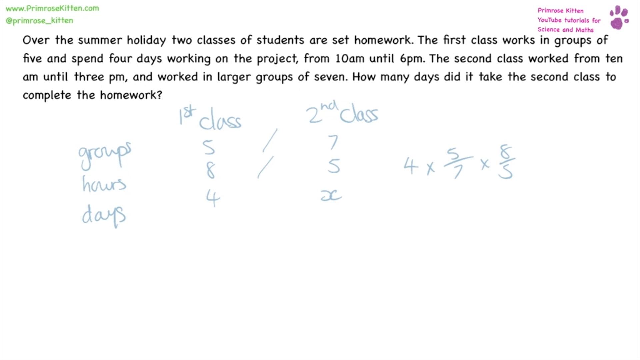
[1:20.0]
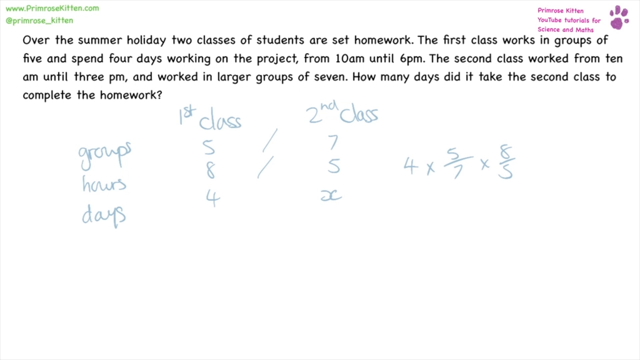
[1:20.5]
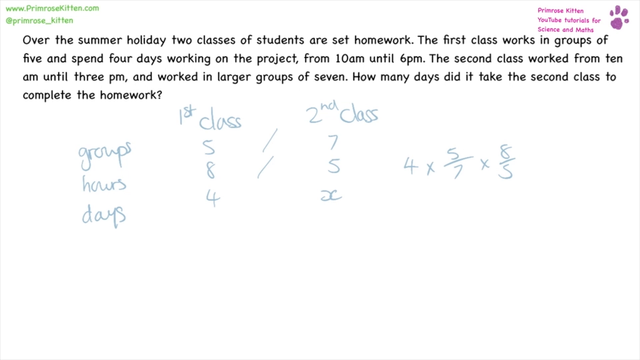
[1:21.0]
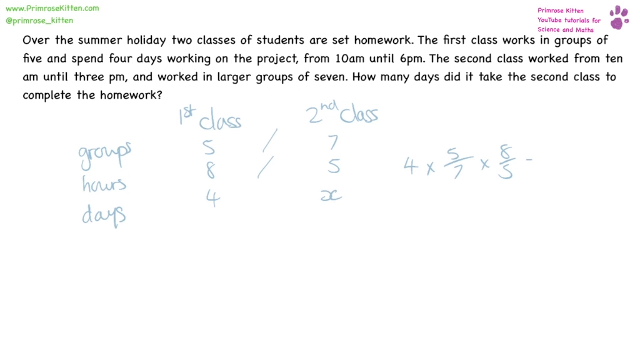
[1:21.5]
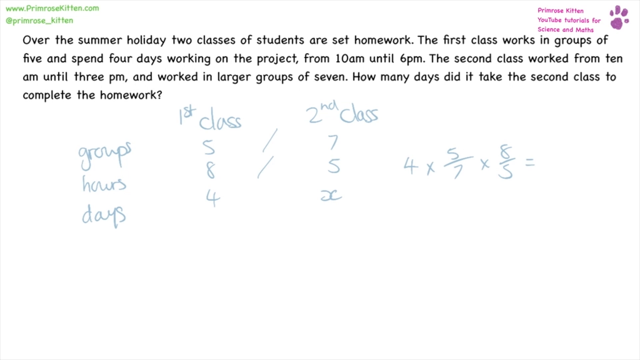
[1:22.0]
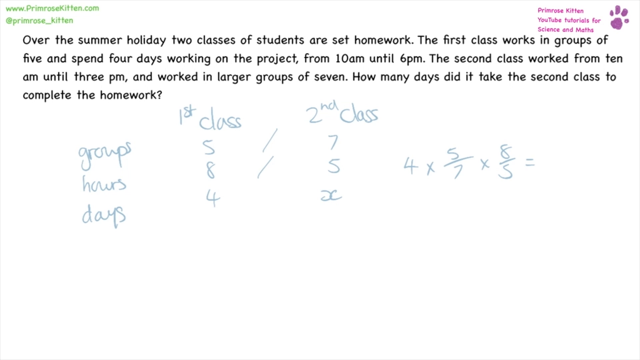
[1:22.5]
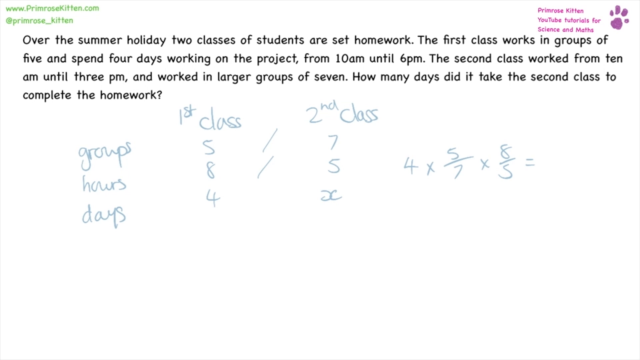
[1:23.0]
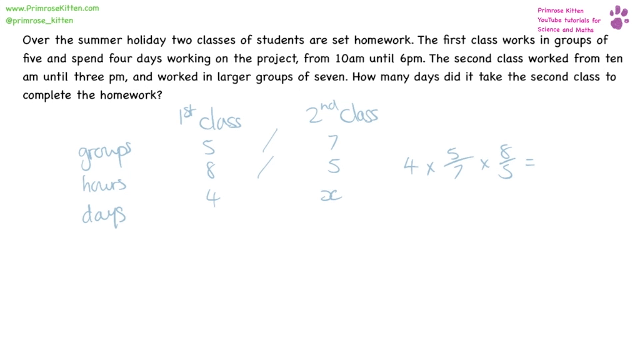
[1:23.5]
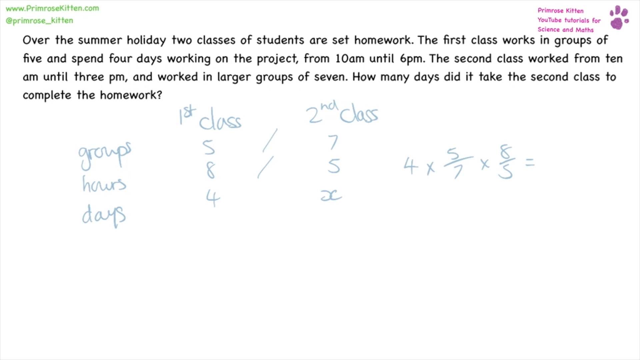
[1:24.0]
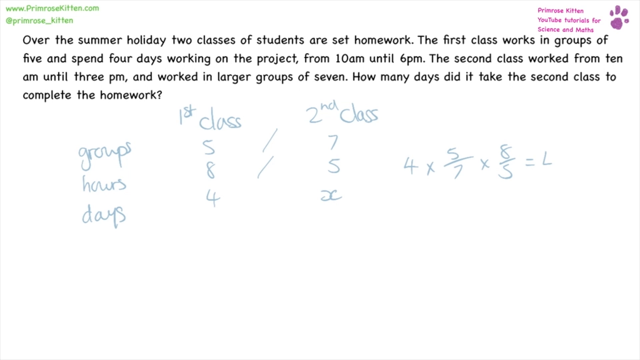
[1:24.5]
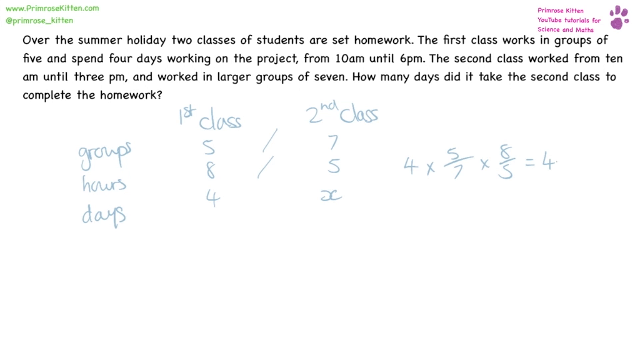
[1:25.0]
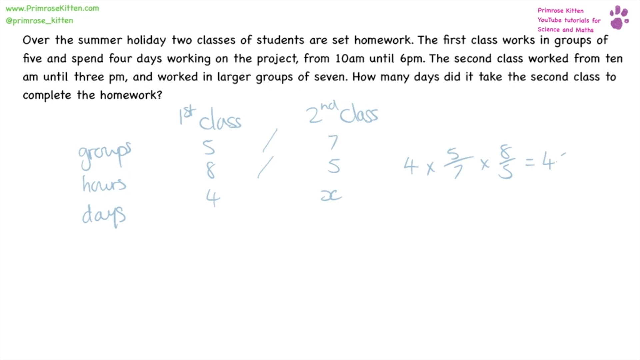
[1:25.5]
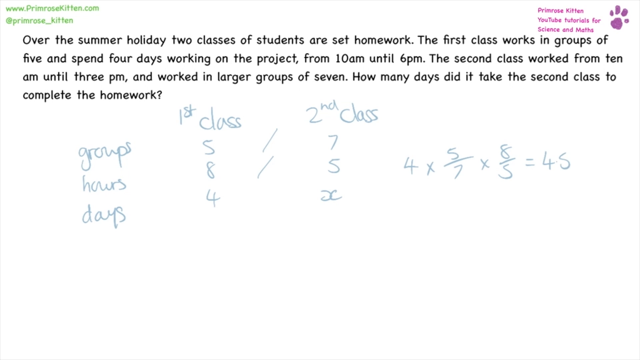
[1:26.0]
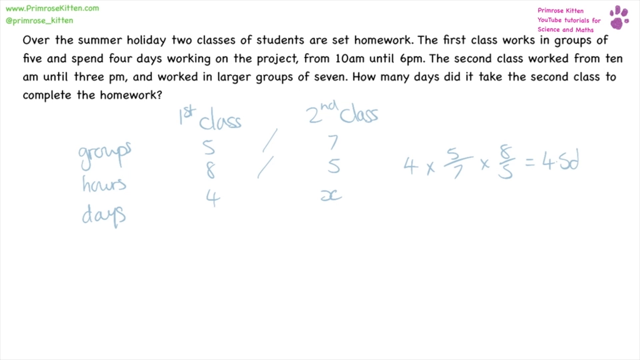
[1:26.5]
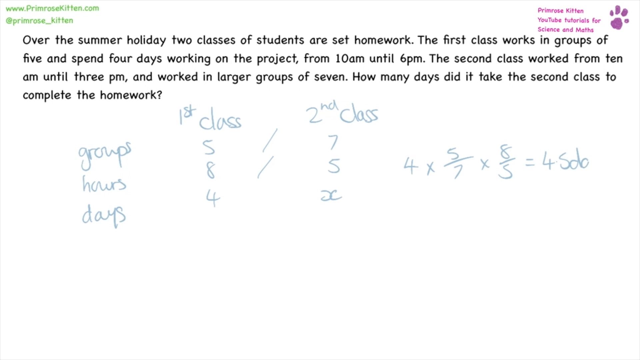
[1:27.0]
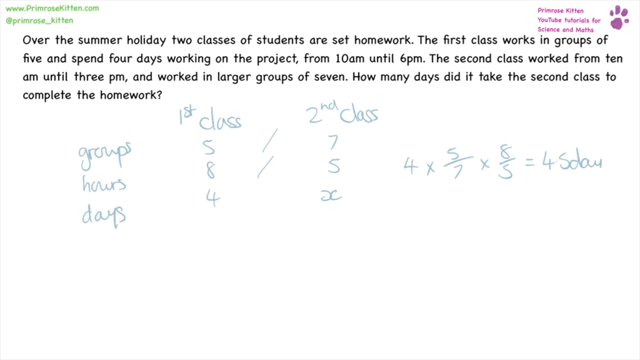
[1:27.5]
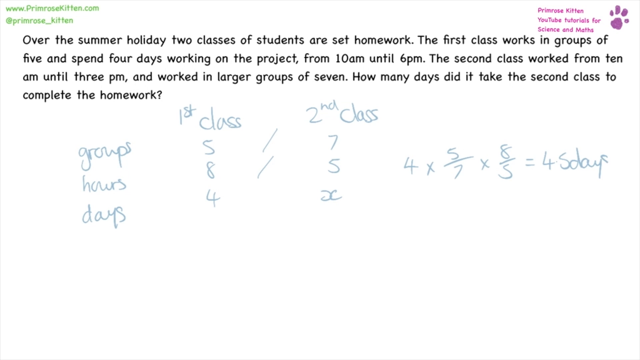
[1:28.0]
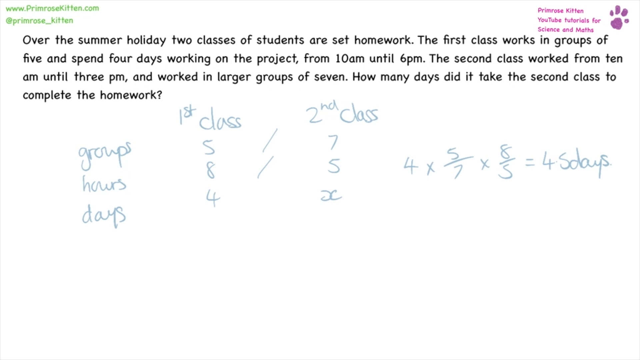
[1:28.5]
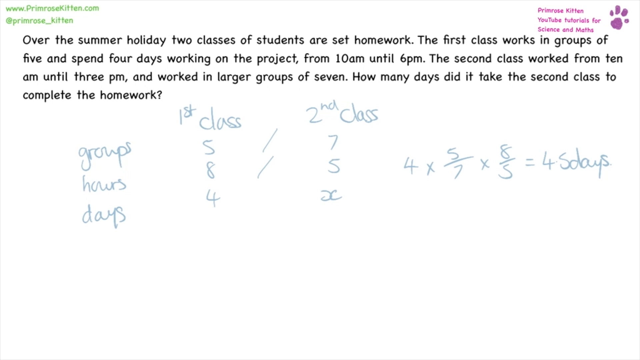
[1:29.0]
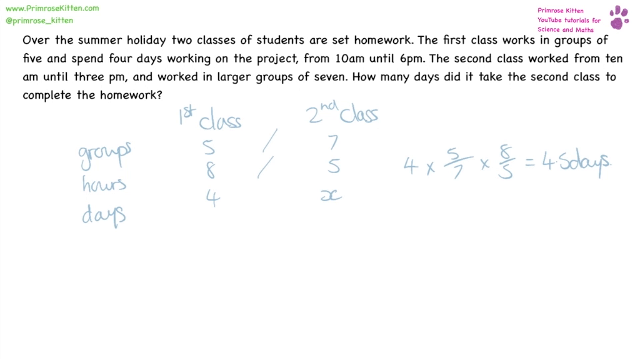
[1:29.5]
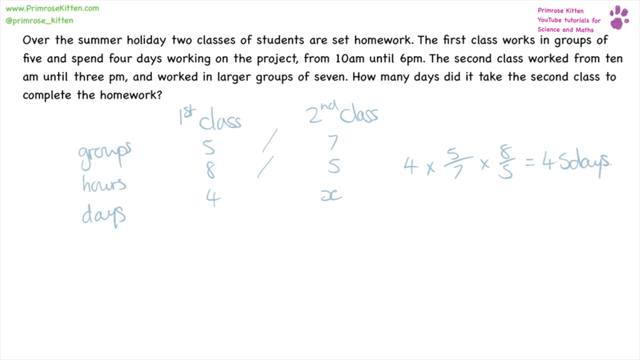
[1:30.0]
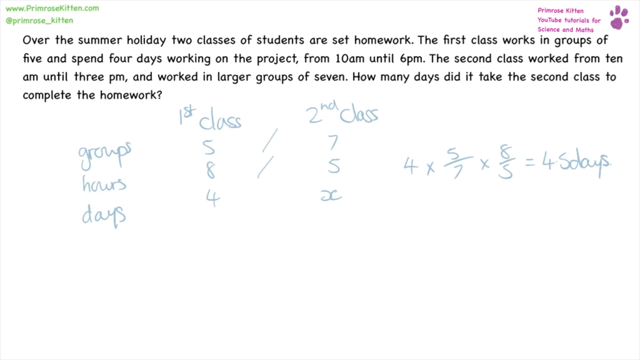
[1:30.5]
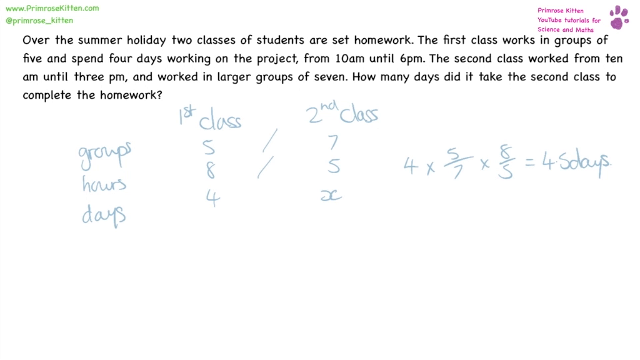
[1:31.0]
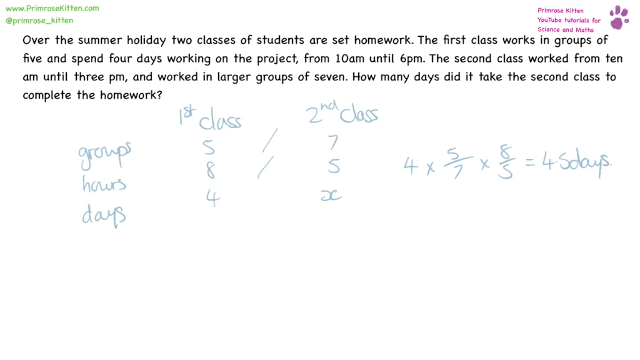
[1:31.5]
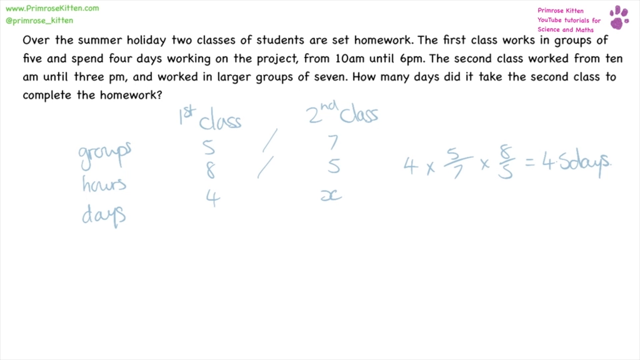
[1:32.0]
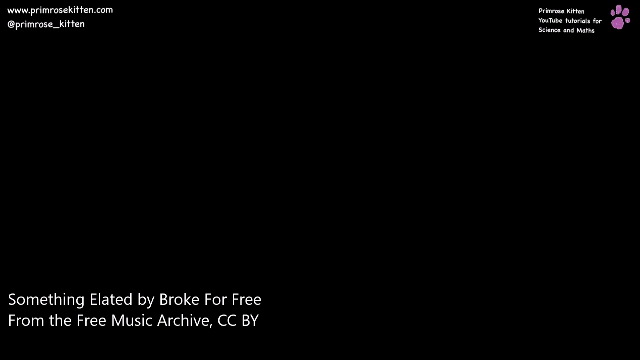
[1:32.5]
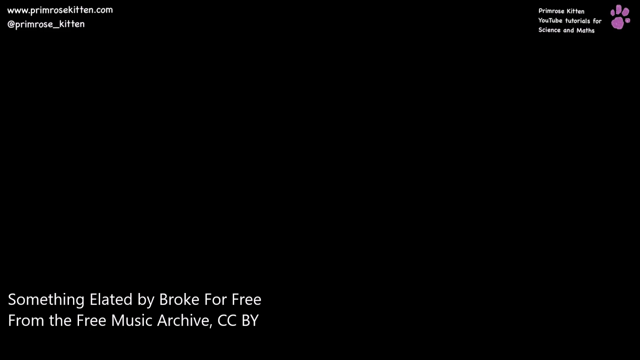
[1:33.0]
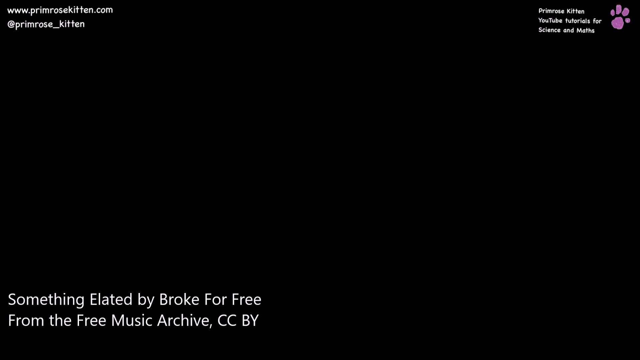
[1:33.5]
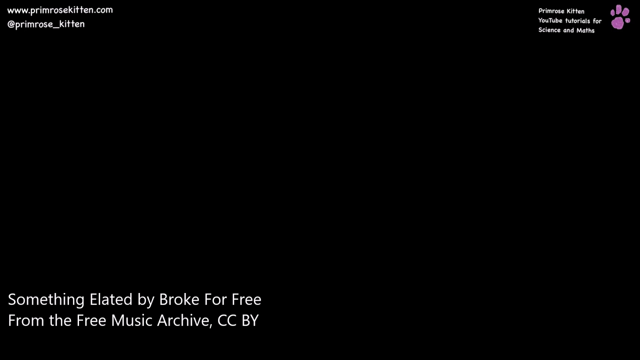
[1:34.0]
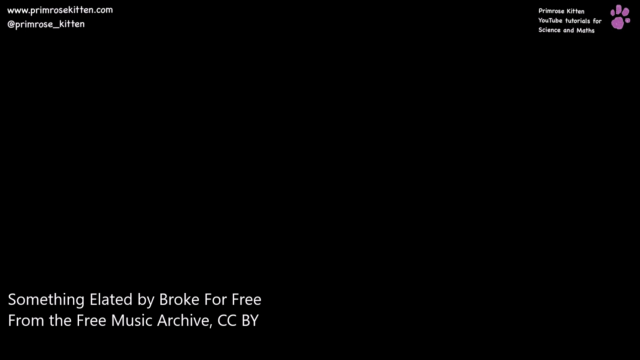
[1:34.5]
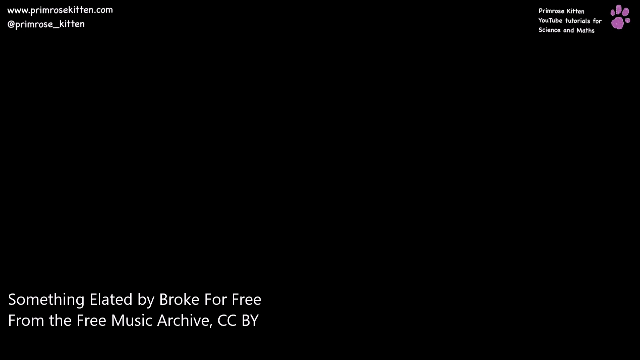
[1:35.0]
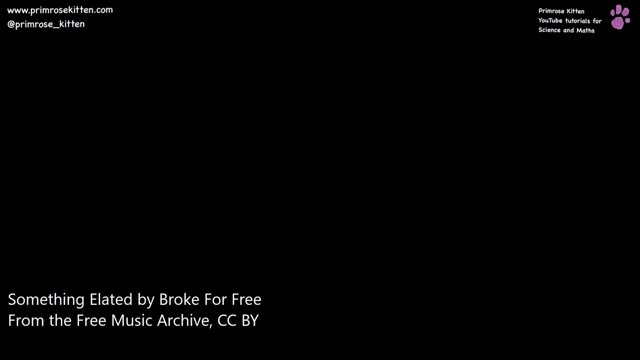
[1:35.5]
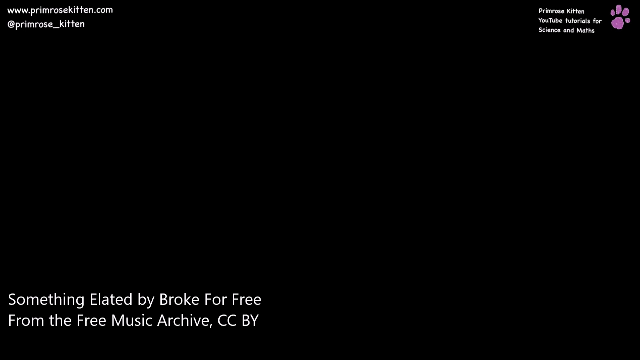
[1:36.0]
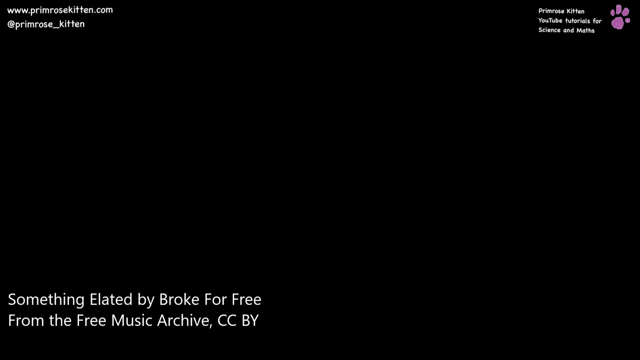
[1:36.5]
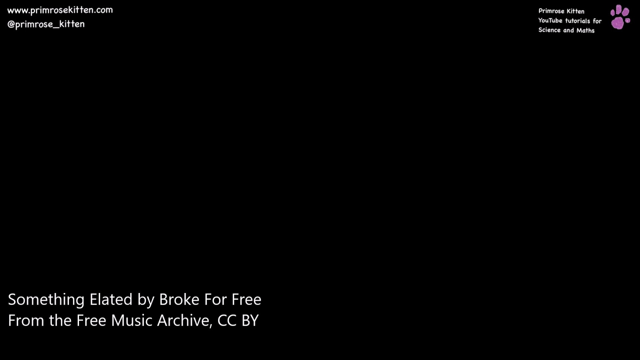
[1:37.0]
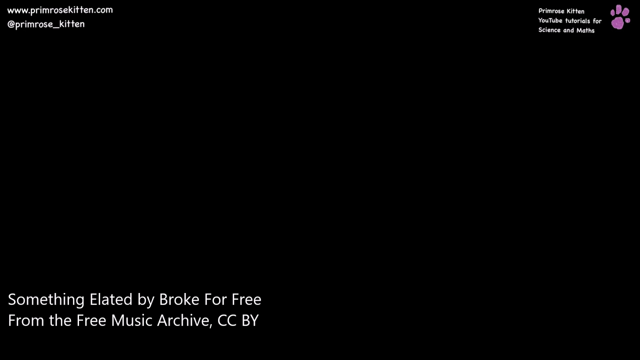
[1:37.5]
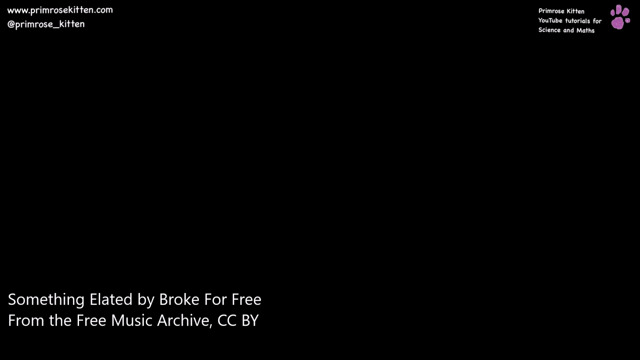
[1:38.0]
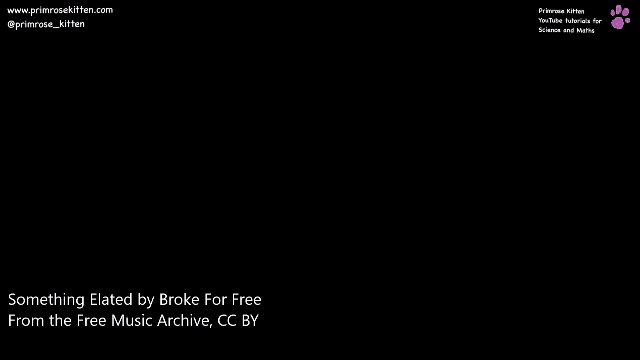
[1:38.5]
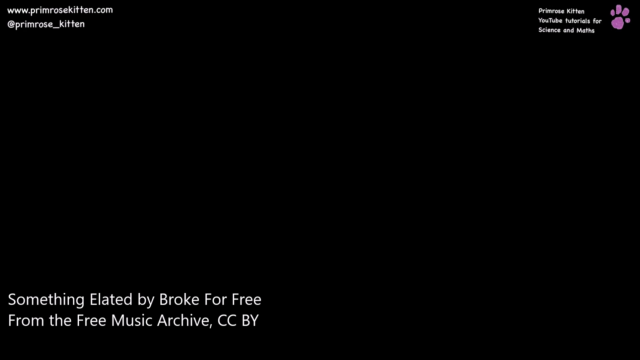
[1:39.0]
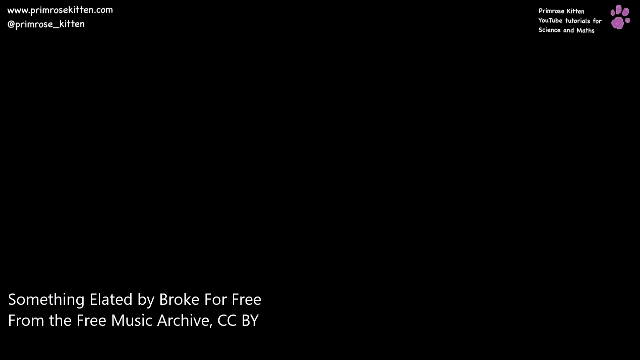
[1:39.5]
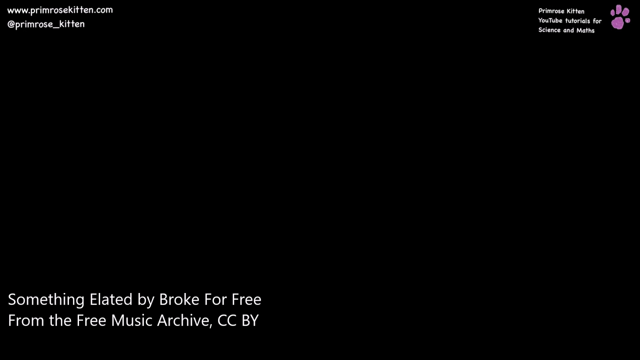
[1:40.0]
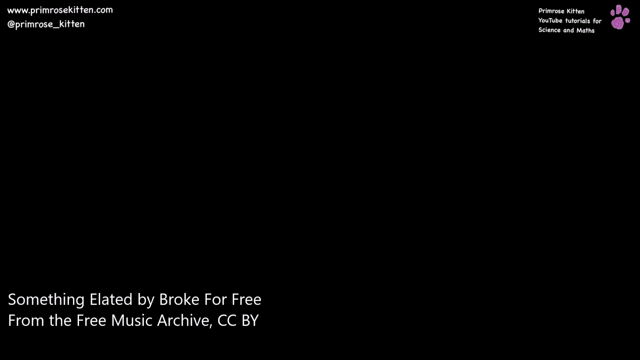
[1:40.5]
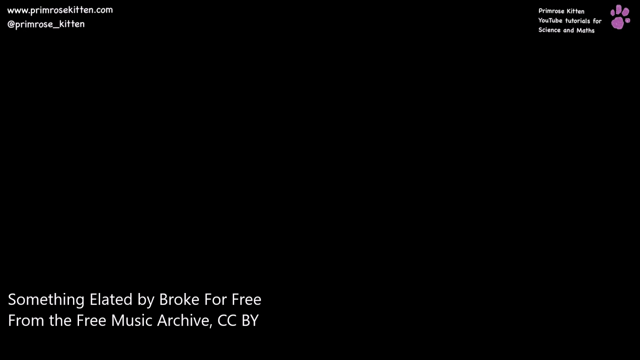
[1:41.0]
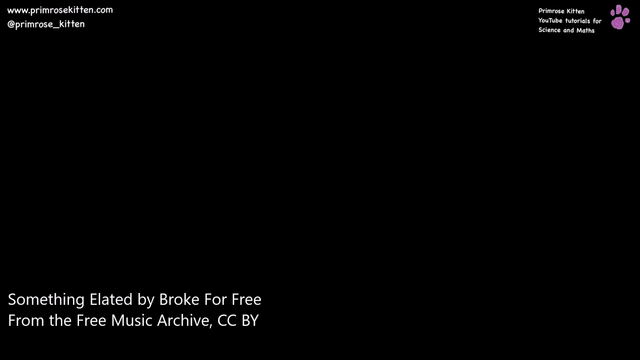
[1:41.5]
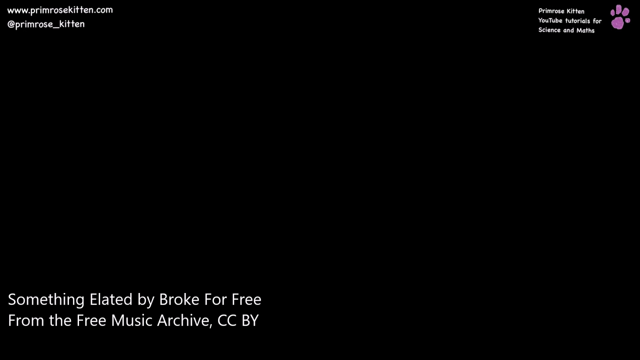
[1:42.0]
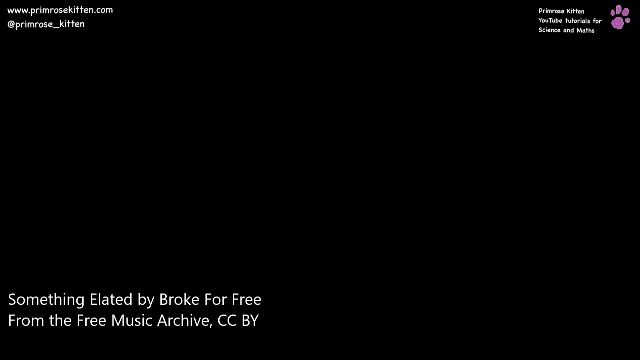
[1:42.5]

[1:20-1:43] The small paragraph in black, small letters with times in numbers is on the screen. It reads in part "How many days did it take the second class to complete the homework?" after stating that the first class works from 10am until 6pm and the second class works from 10am until 3pm in larger groups of 7. The working is simplified into groups, hours and days: group 5, hours 8, days 4 for the first class, and group 7, hours 5, with the days unknown, for the second class. The calculation continues with 4 times 5 divided by 7 times 8 divided by 5, giving 5 days. The screen then goes blank, more text appears, and the website is visible.